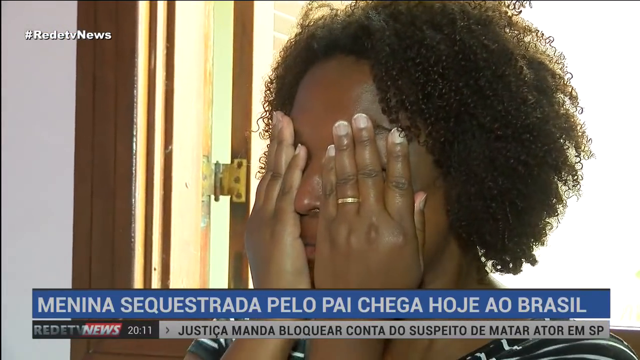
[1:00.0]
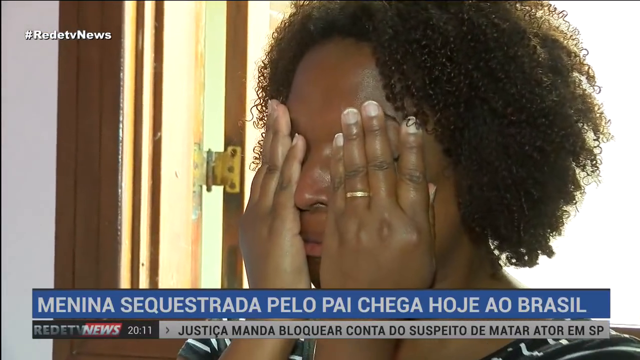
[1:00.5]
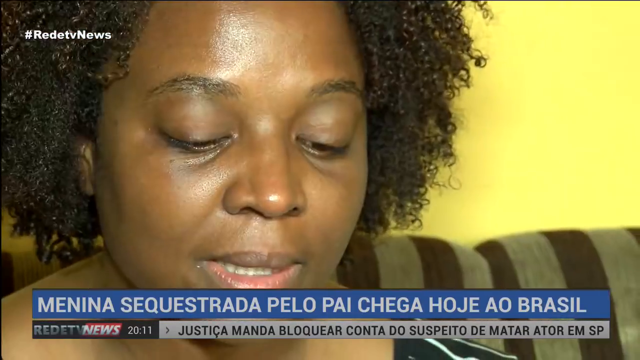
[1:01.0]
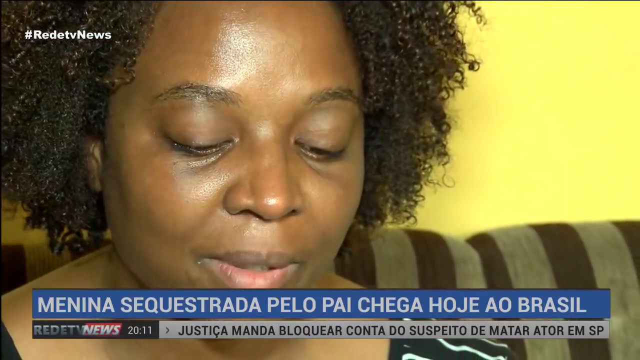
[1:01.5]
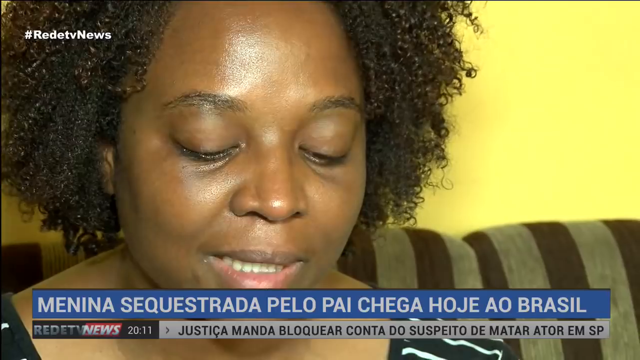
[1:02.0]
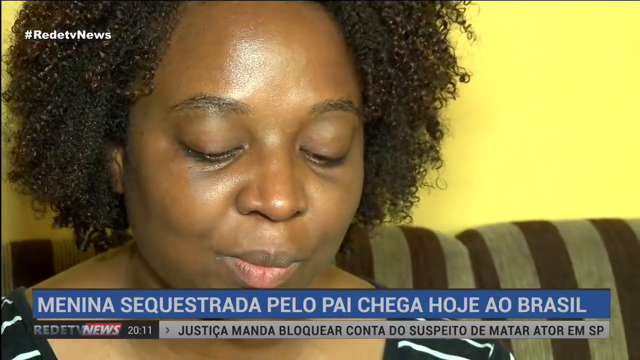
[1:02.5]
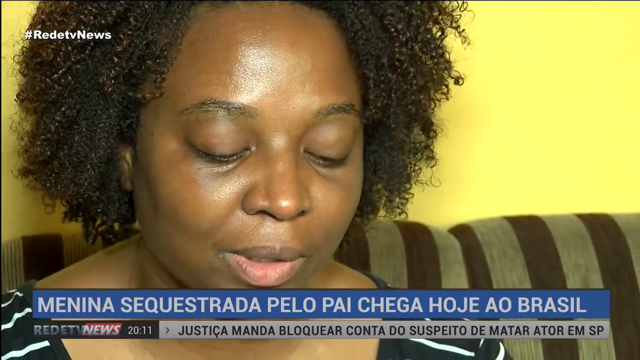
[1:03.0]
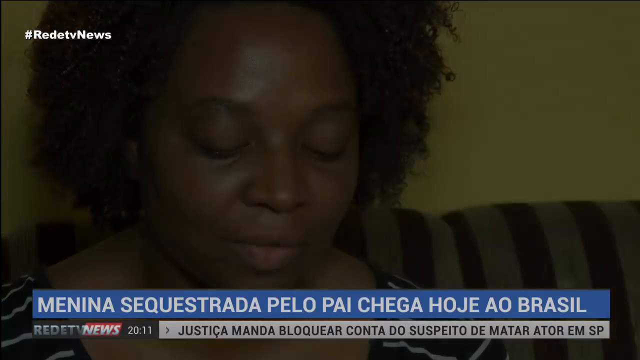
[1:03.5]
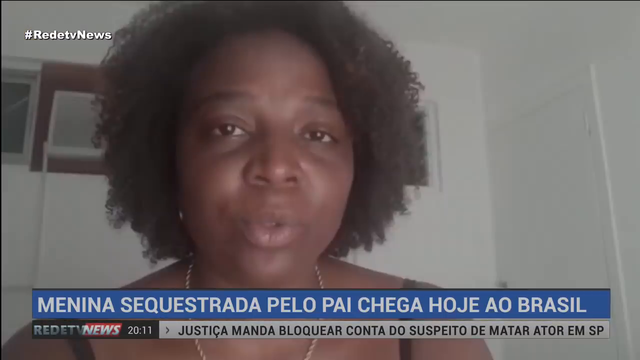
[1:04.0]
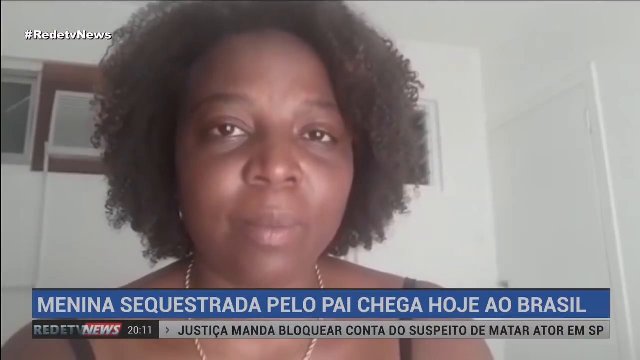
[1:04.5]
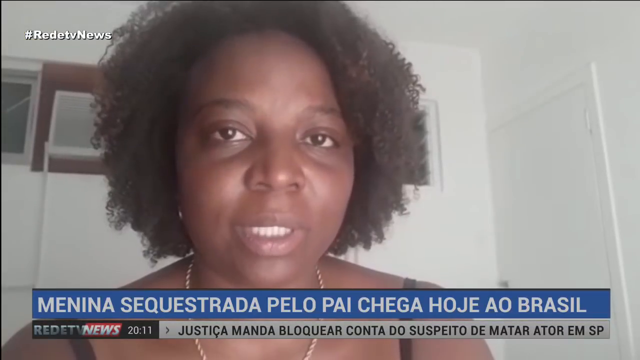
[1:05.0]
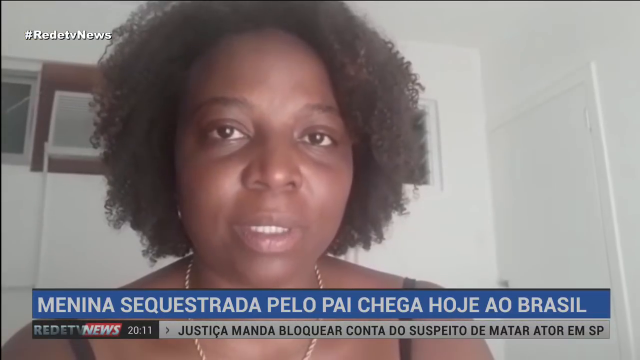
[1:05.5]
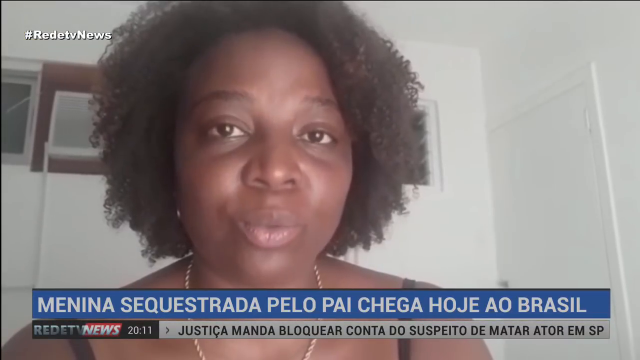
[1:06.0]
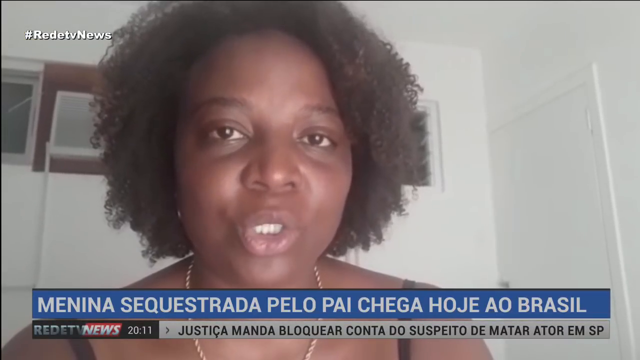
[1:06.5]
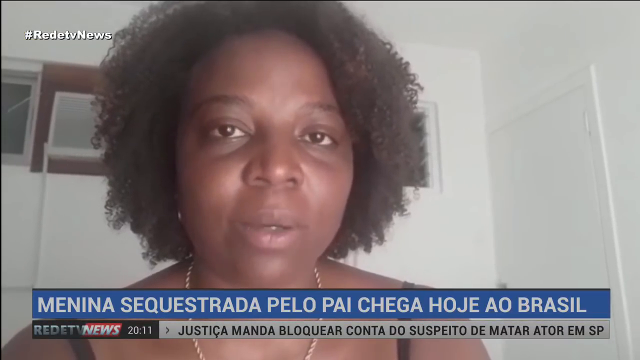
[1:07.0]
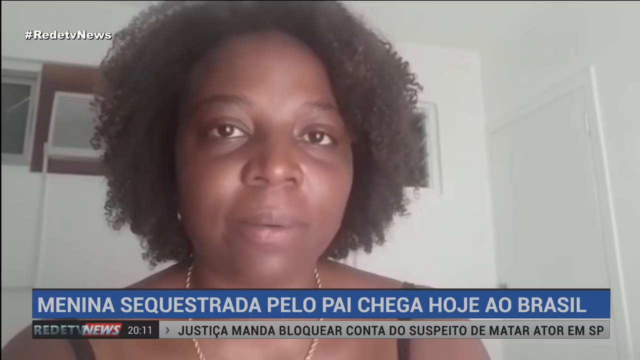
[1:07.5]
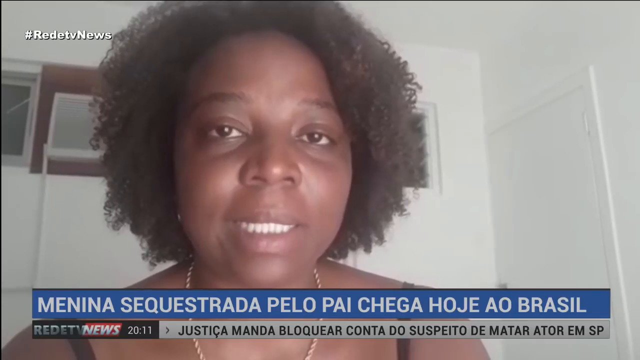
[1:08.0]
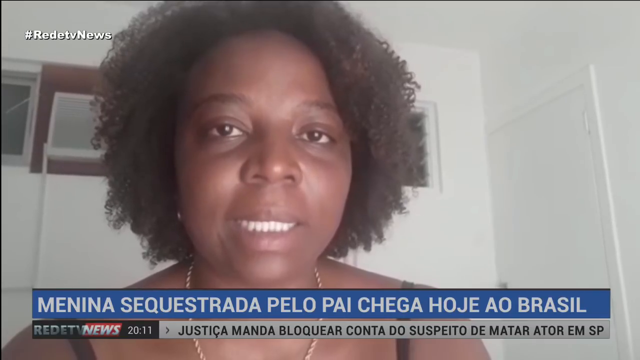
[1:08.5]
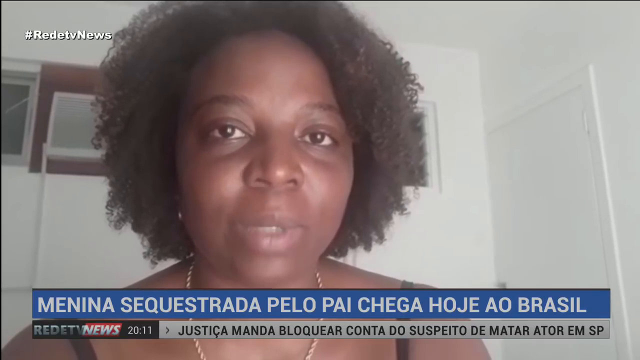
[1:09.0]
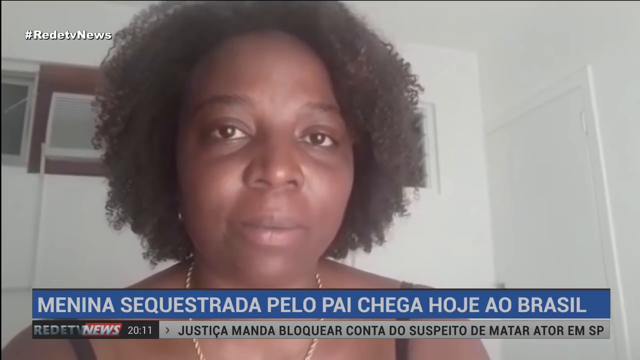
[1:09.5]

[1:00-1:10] A woman sobs into her hands and wipes her tears away. A blue bar at the bottom contains Spanish writing, including "brazil". She is on a couch striped dark brown and light brown, reading the document. She then talks in an interview, no longer crying and looking a little more composed.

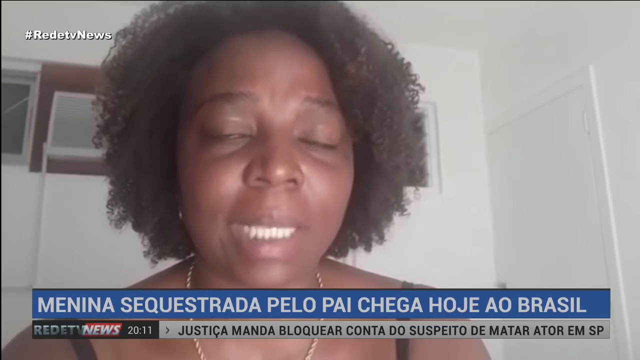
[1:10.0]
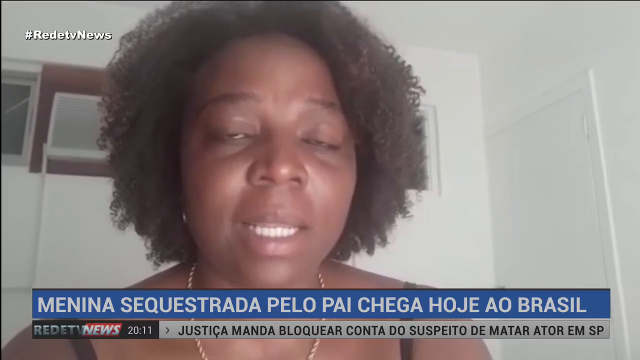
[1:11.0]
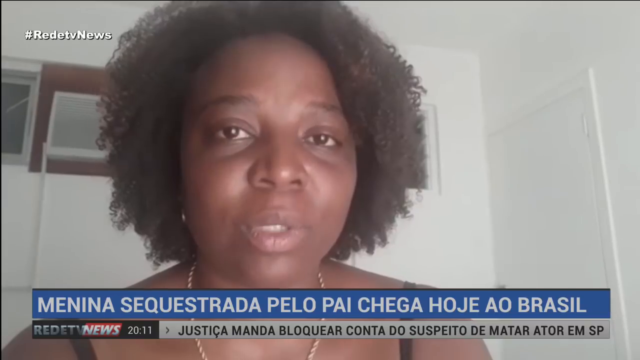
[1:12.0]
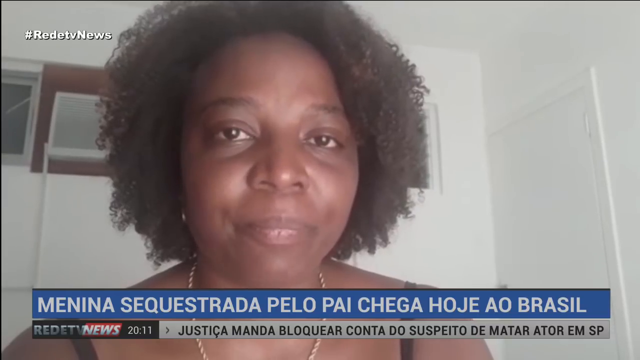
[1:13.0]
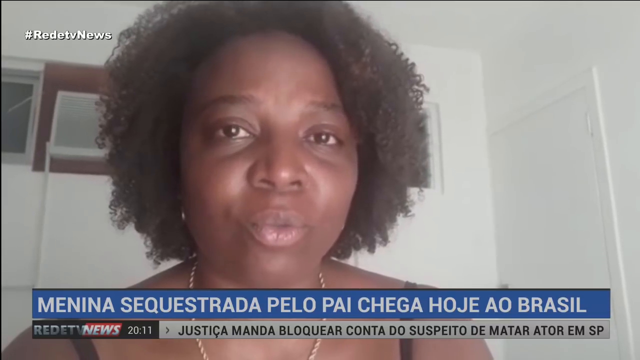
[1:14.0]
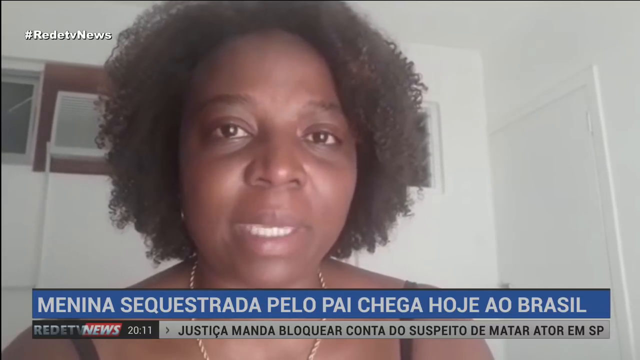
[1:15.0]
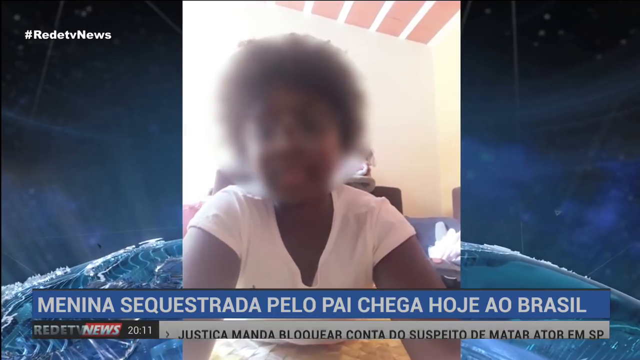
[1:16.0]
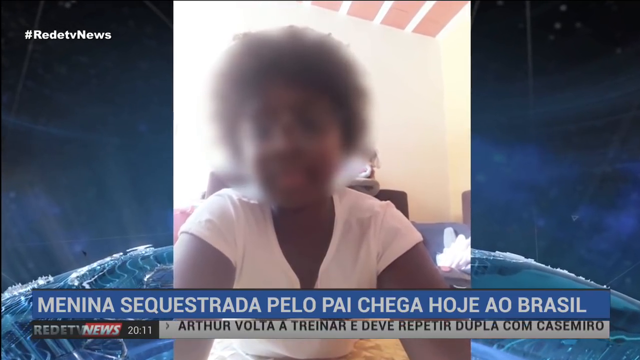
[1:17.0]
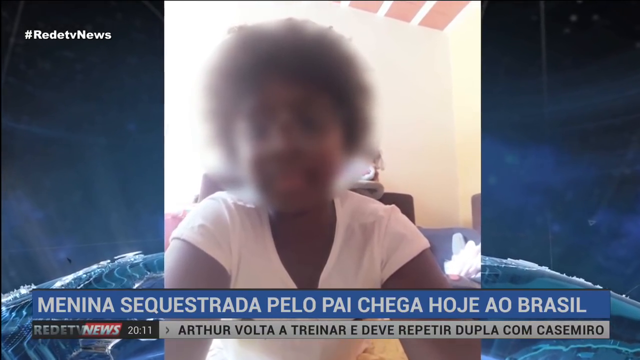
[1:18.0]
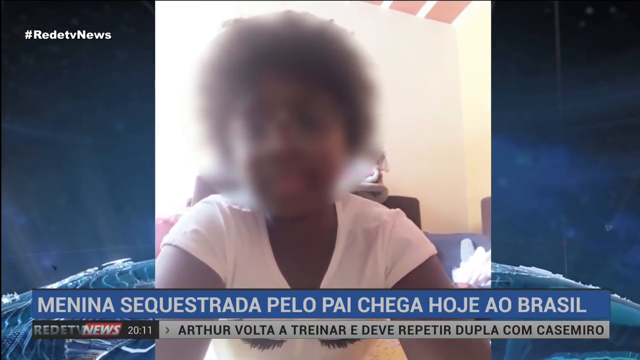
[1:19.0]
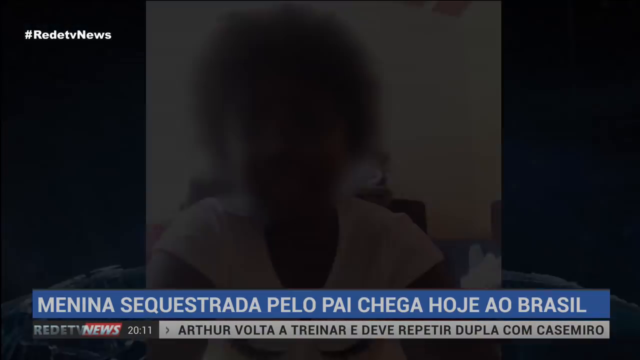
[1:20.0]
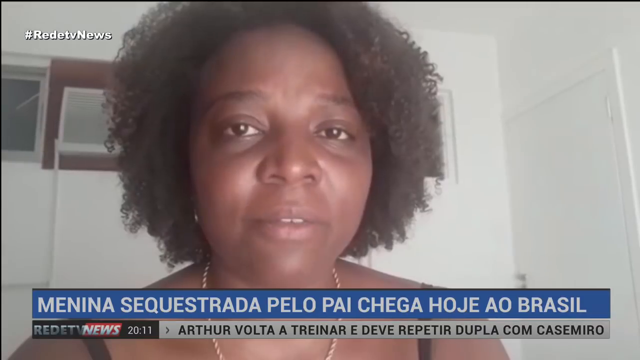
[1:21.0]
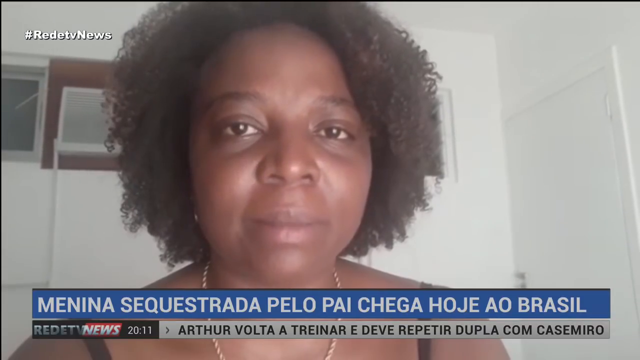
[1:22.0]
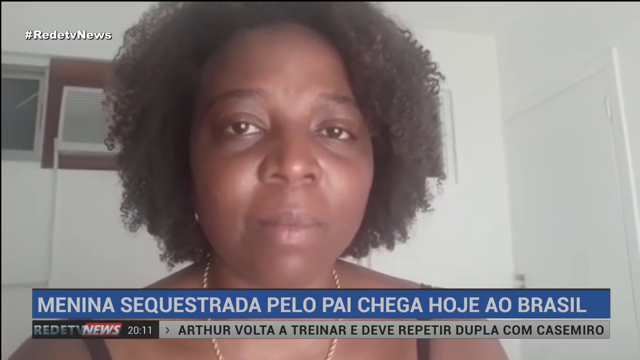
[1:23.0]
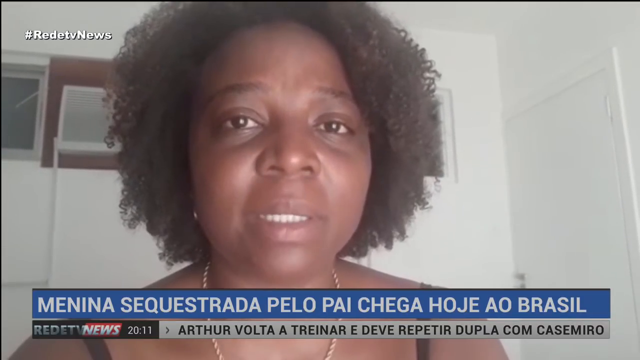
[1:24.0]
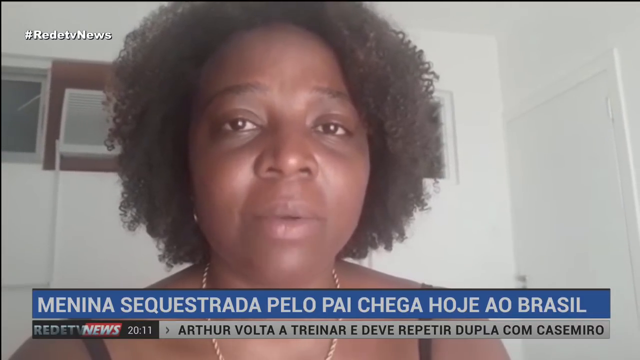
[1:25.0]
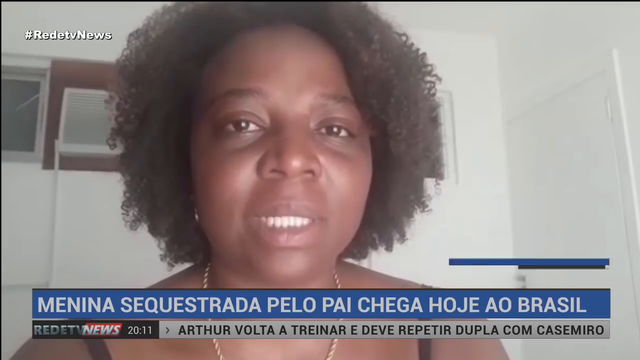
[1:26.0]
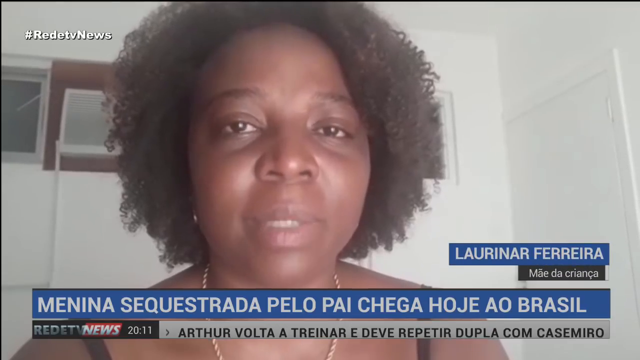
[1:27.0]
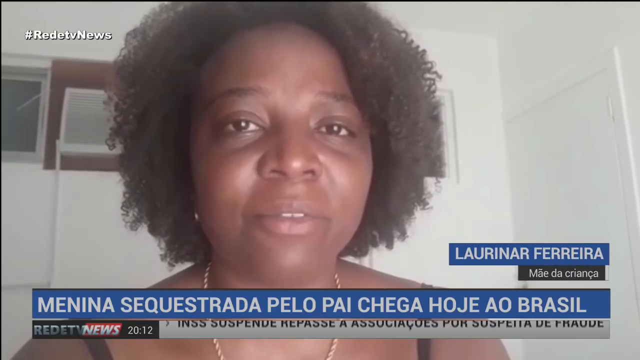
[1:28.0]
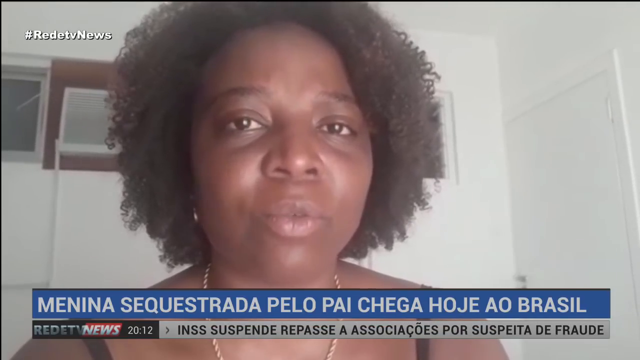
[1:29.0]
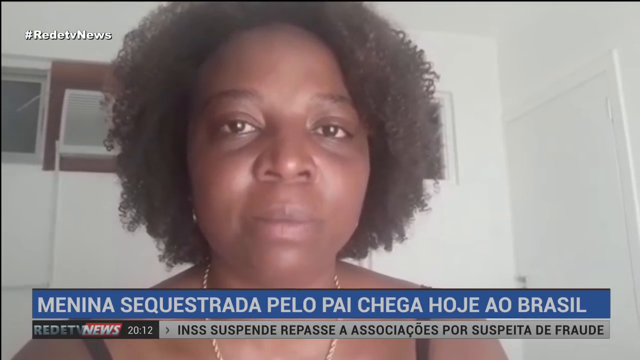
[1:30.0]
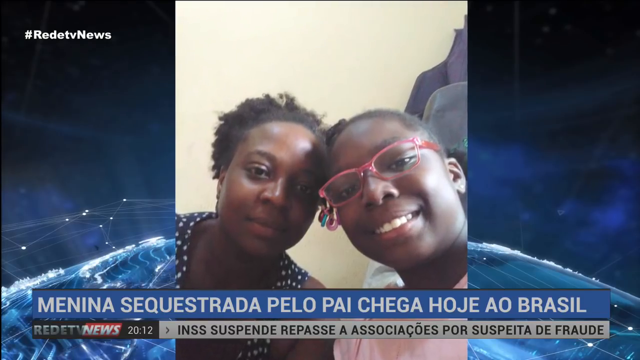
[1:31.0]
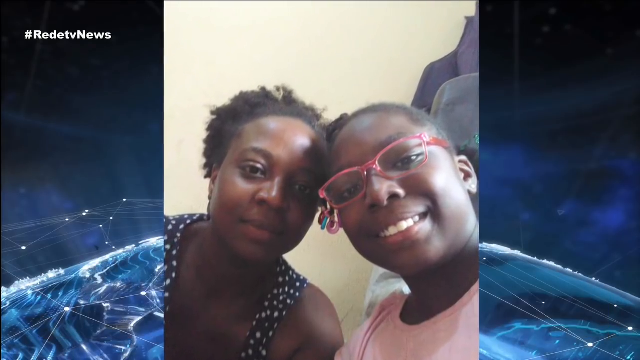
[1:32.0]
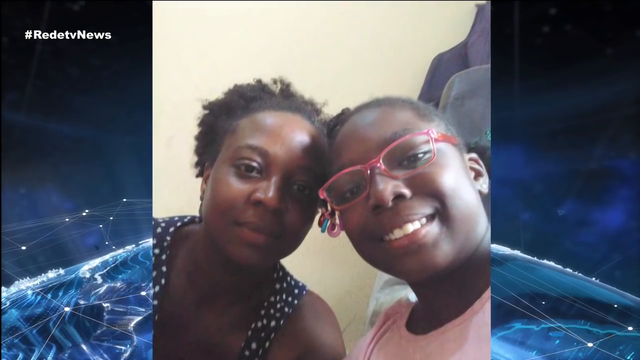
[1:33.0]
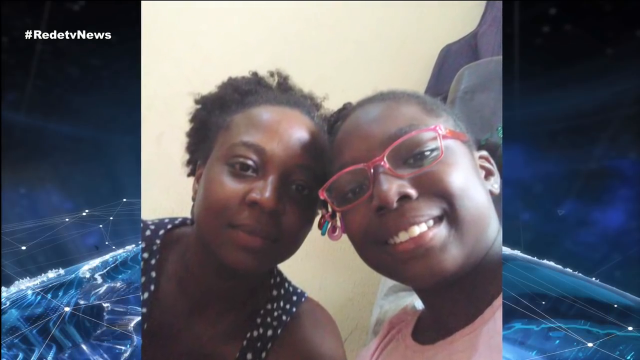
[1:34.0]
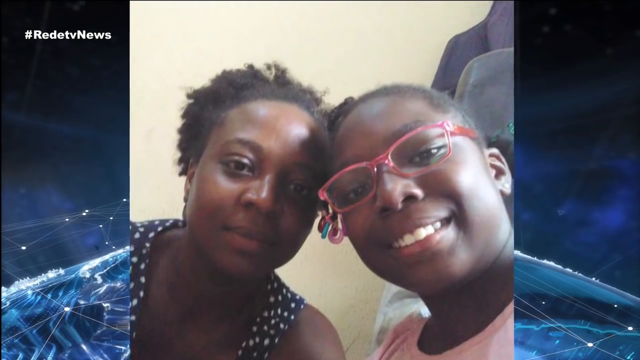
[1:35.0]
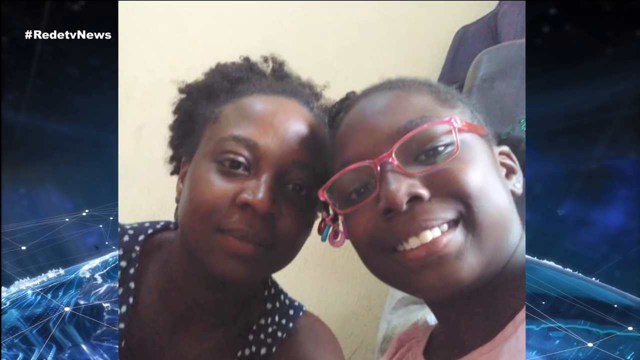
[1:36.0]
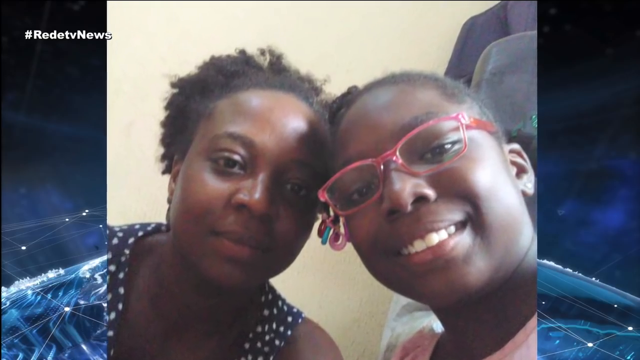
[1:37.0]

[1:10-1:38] A black woman is interviewed, speaking into the camera in a house with white walls, with what may be pictures behind her. She looks put together, wearing a necklace and earrings. A picture of a black woman, possibly her, is shown with the face blurred out. Spanish writing appears underneath her, in which "Brazil" is recognizable, and the text gives her name as "Lorena Ferreira". The picture of her and another woman, possibly a younger girl, posing with their foreheads together is shown. After this picture, the reporter is shown again, speaking.